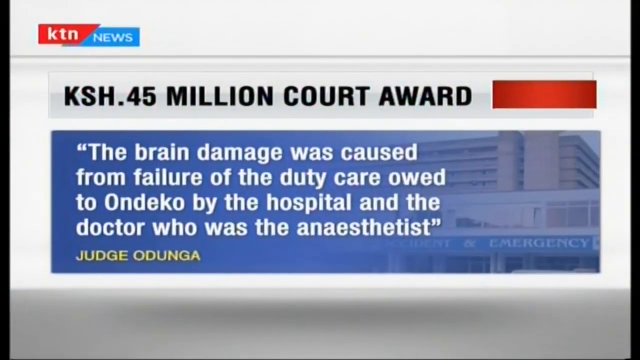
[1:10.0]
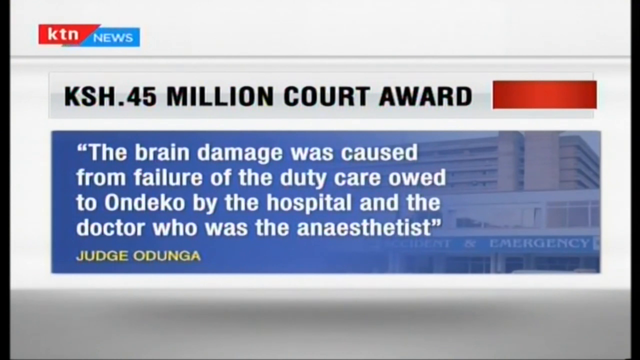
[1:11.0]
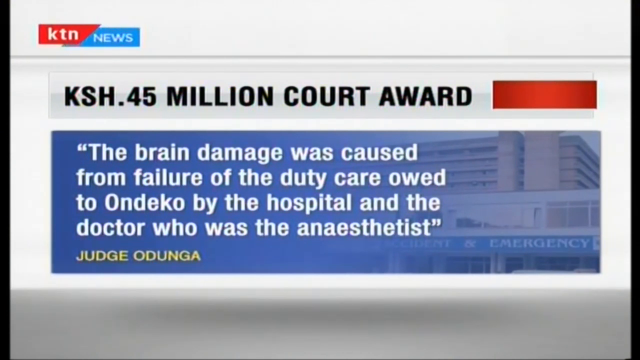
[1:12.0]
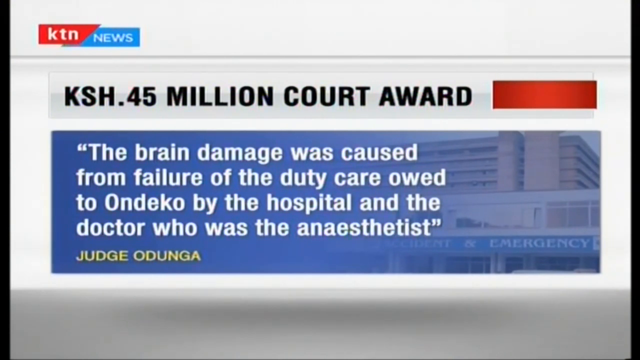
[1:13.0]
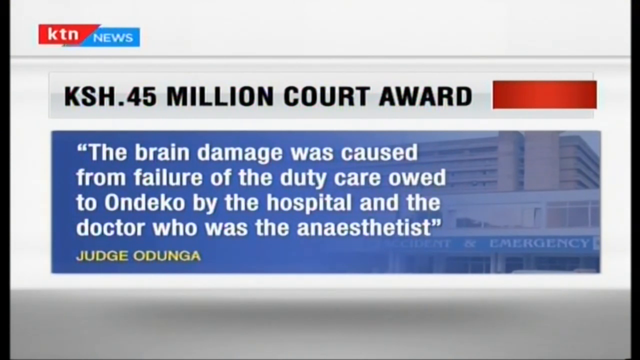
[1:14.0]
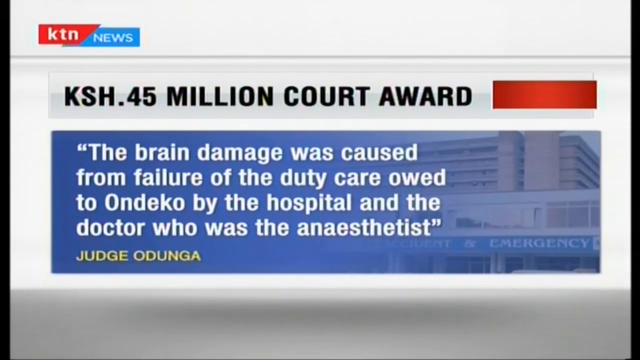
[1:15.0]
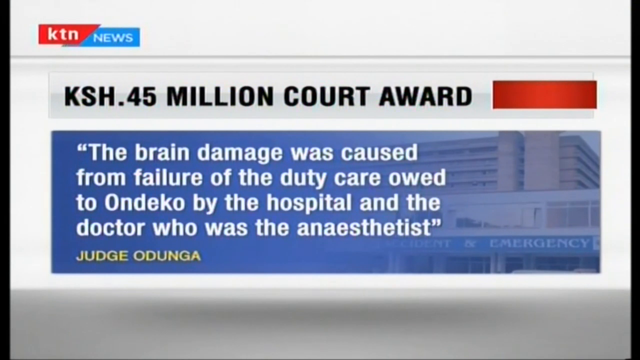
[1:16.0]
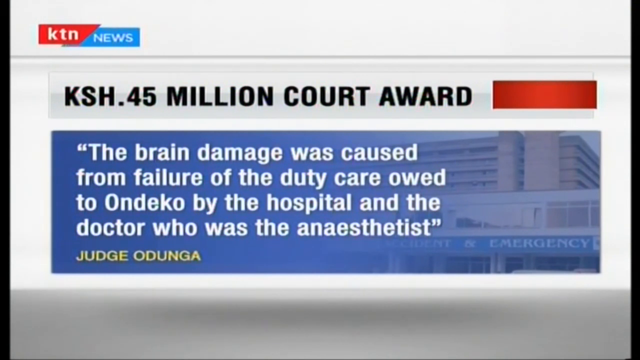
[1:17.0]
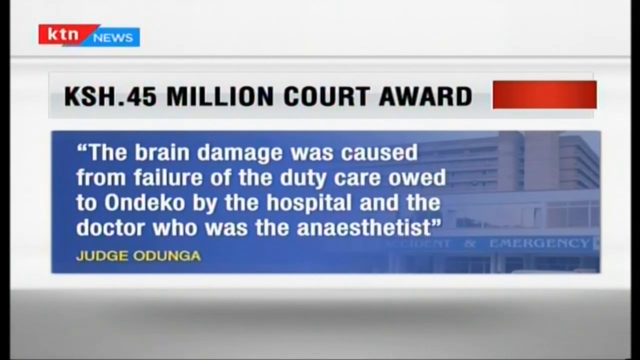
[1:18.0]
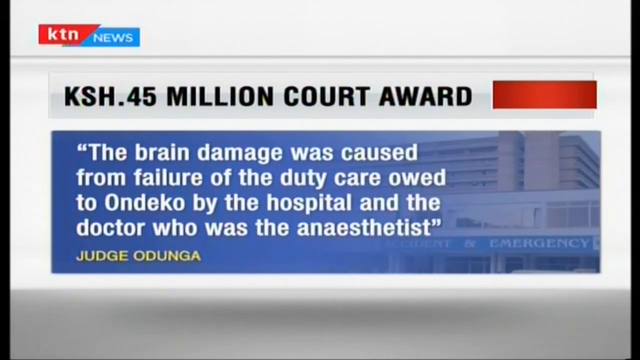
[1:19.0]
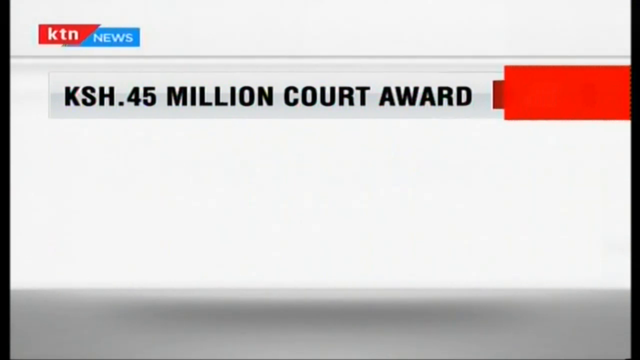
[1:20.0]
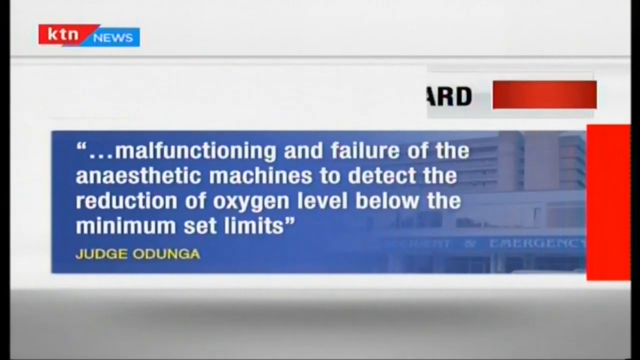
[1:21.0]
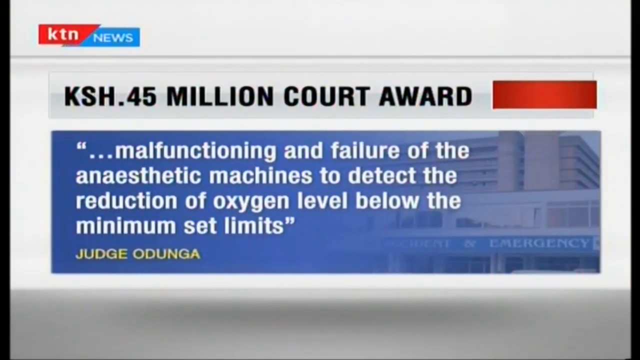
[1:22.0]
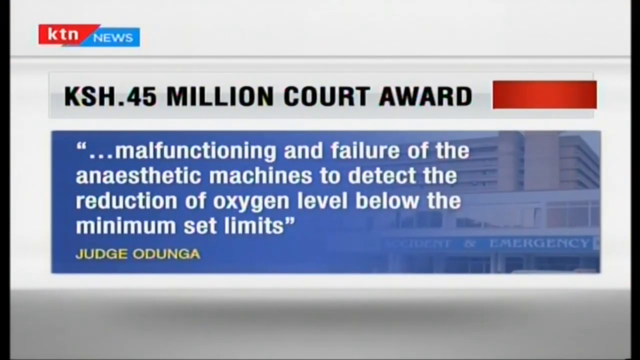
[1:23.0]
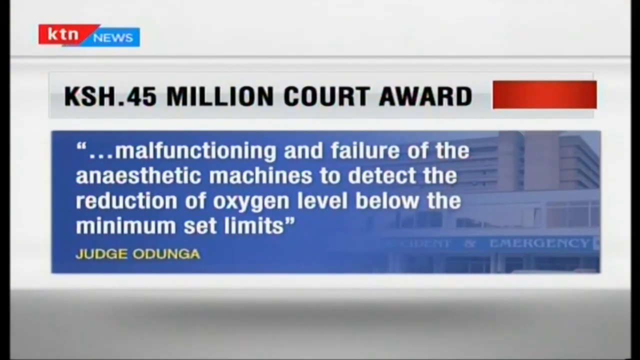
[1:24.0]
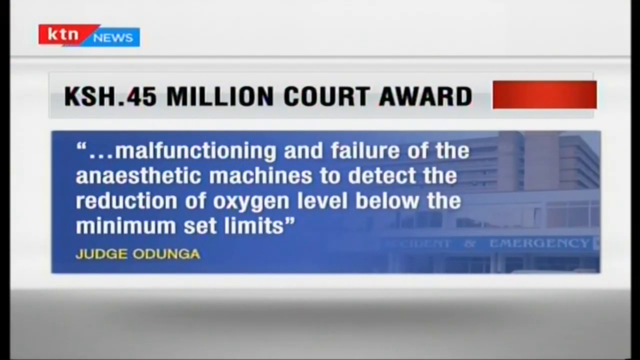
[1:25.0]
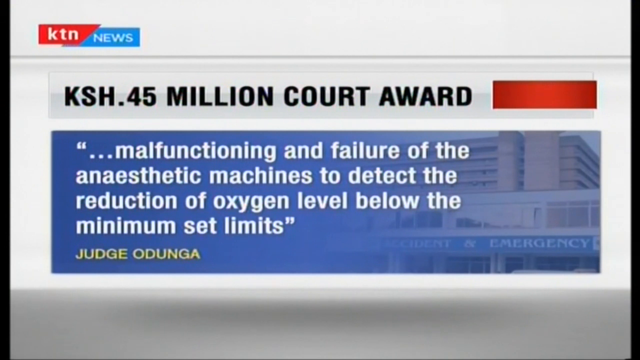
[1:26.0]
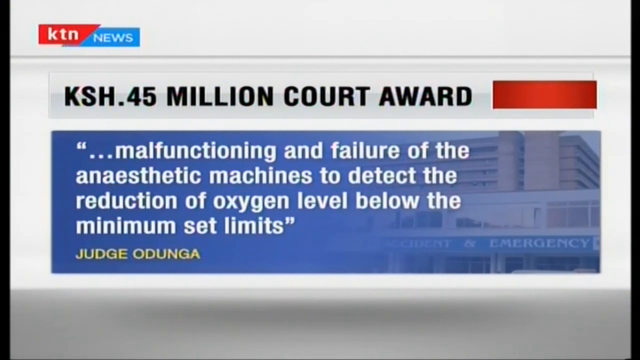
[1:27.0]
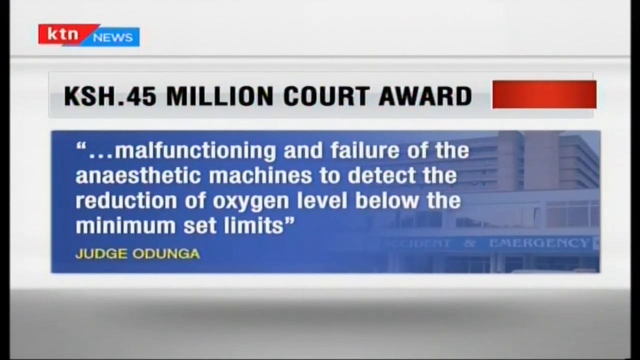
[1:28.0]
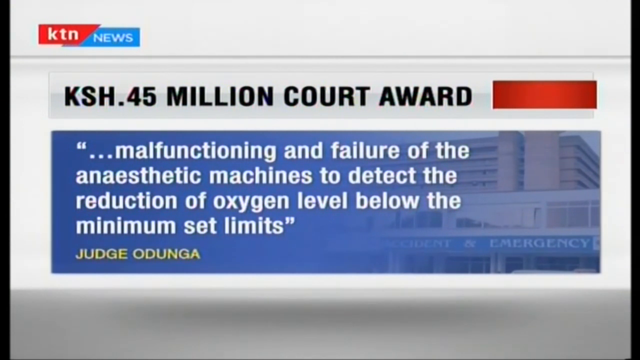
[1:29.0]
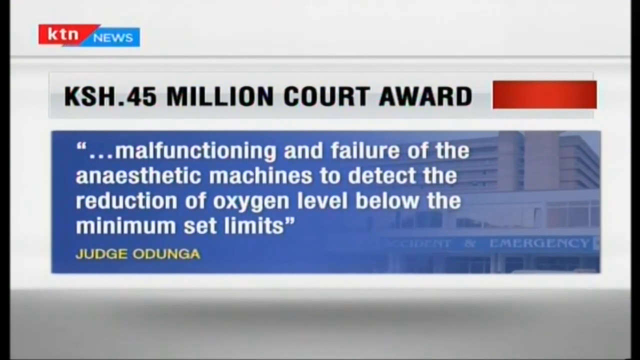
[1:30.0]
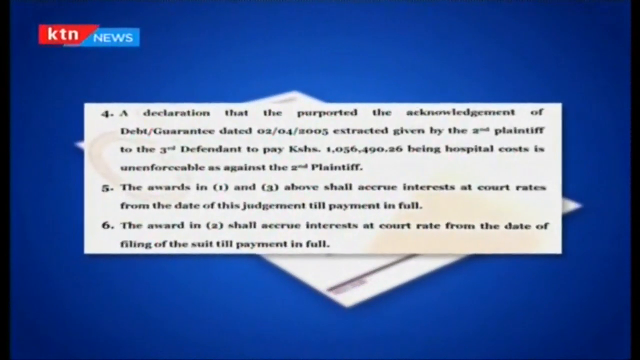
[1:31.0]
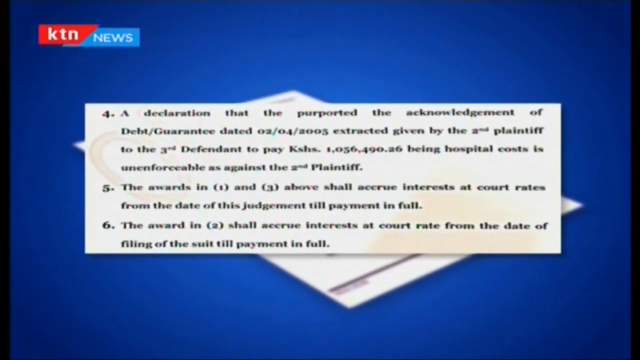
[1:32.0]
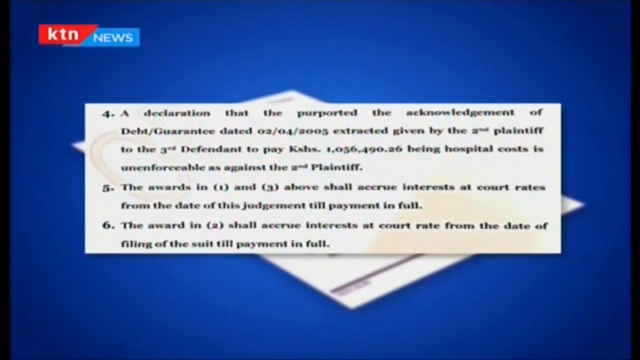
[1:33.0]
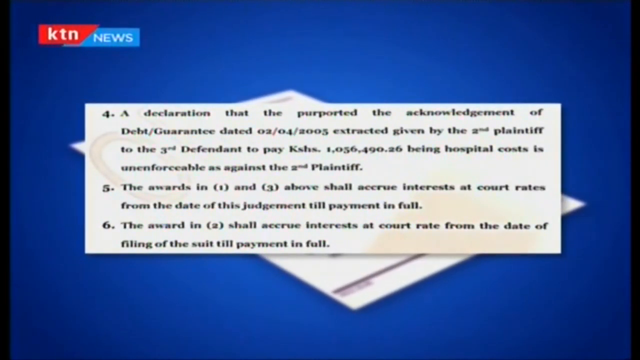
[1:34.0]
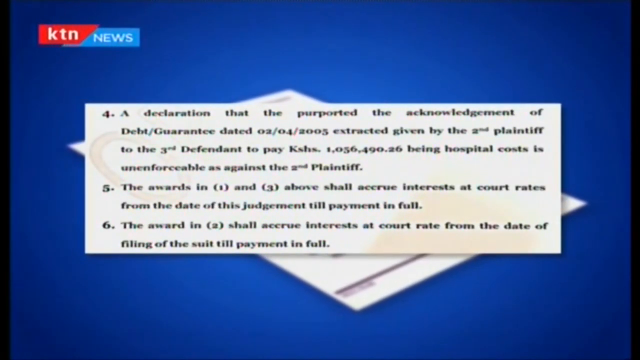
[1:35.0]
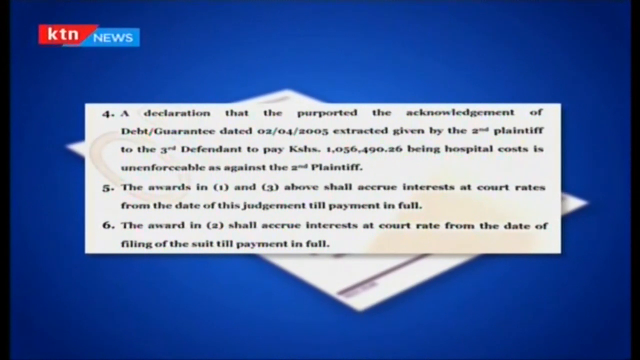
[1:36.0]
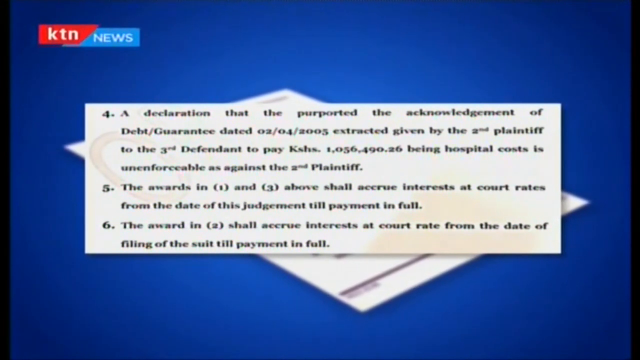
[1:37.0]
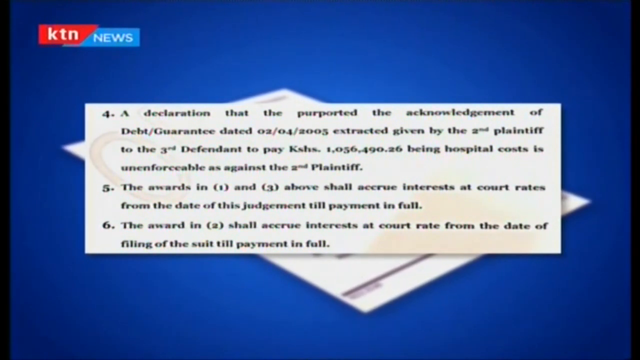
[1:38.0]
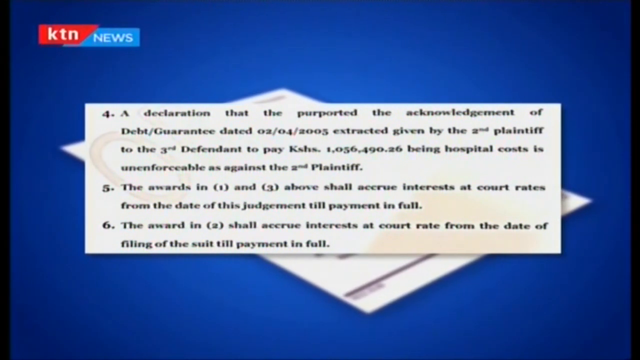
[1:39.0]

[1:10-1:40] The 45 million KSH court award with the quote from Judge Ogunga is shown on a white background with blue accents. The quote continues about the malfunctioning and failure of the anesthetic machines that detect the reduction of oxygen level below the minimum set limits. A small, faint image of the hospital is in the background. Another court document appears, stating that the purported acknowledgment of debt guarantee dated 02-04-2005, given by the second plaintiff to the third defendant to pay a very blurry amount being hospital costs, is unenforceable against the second plaintiff. More detail about the various awards follows, shown as a high-resolution white scan of the court document on a blue background. There are no people; the visuals are infographic and text-heavy.